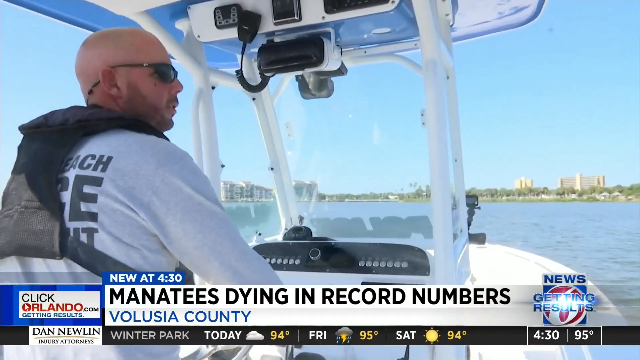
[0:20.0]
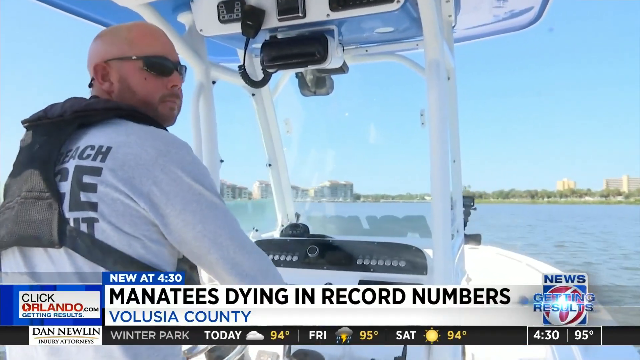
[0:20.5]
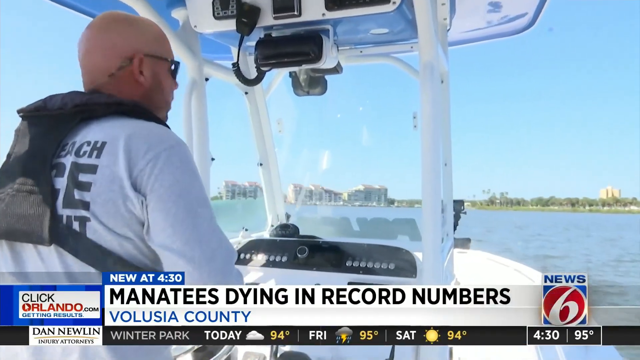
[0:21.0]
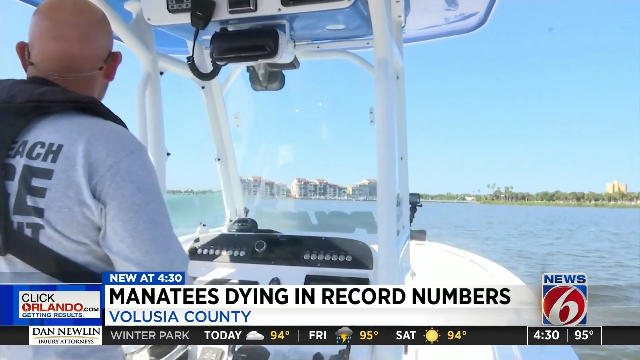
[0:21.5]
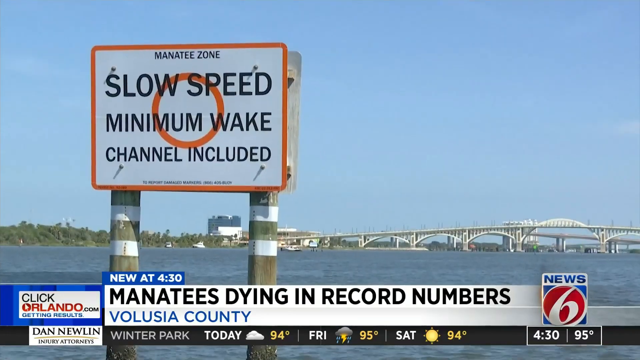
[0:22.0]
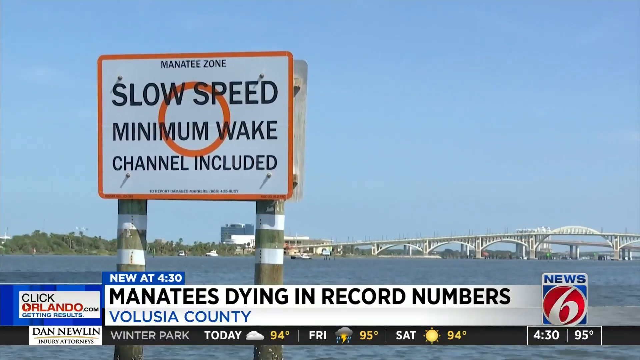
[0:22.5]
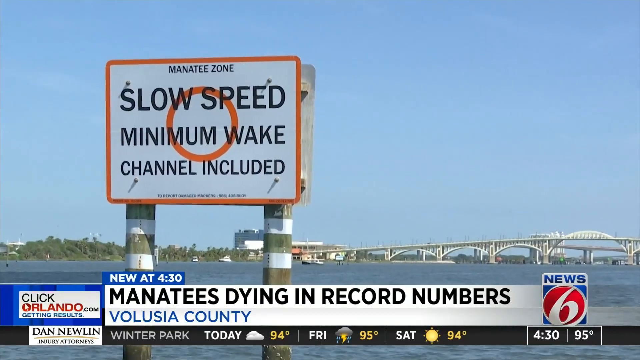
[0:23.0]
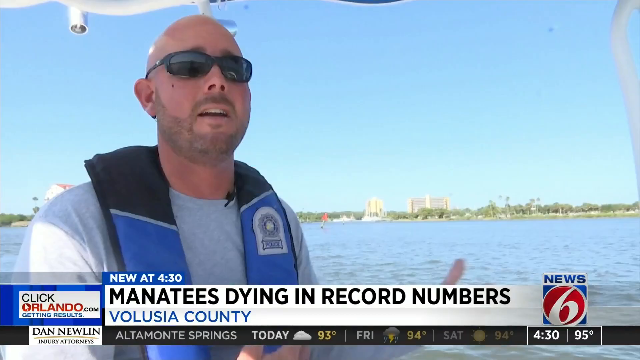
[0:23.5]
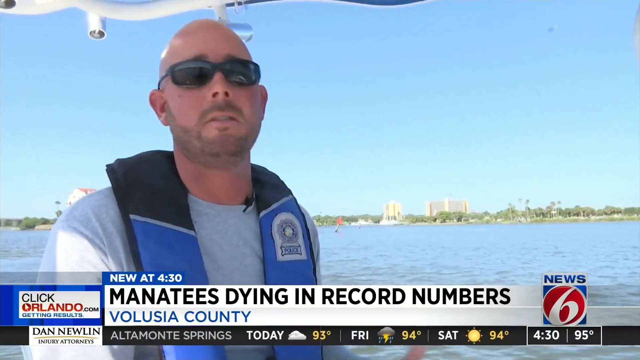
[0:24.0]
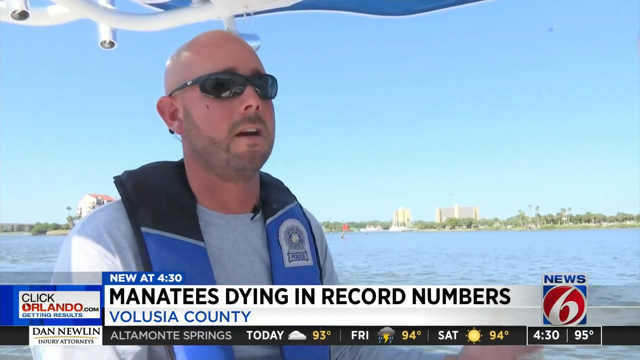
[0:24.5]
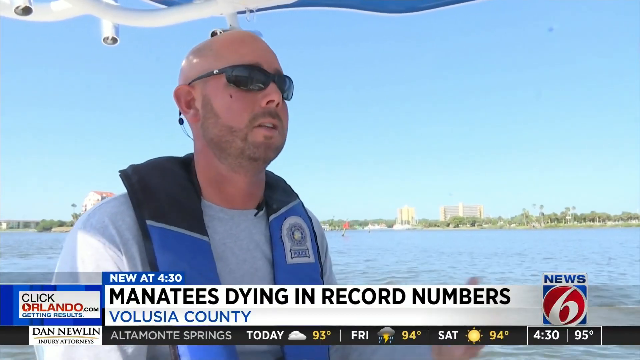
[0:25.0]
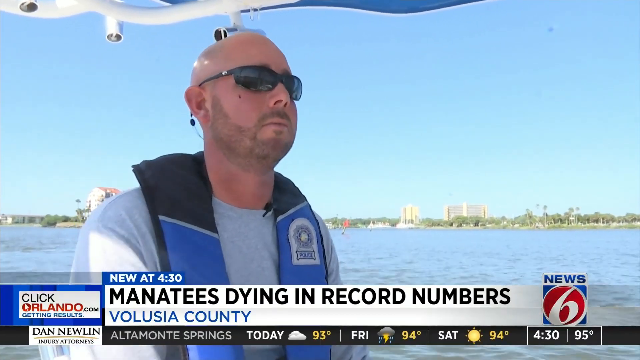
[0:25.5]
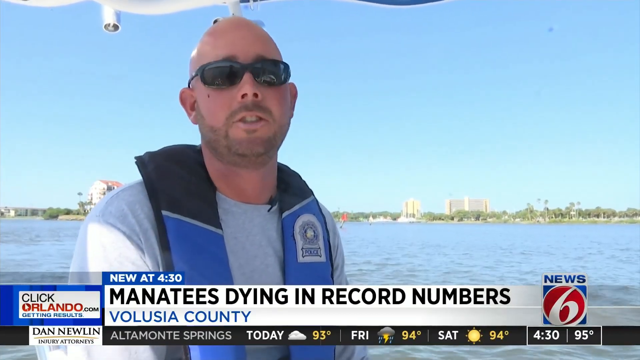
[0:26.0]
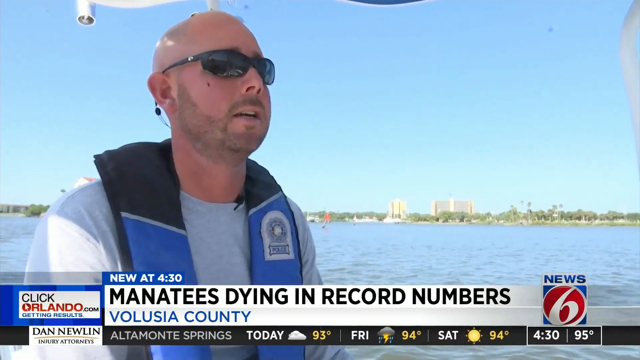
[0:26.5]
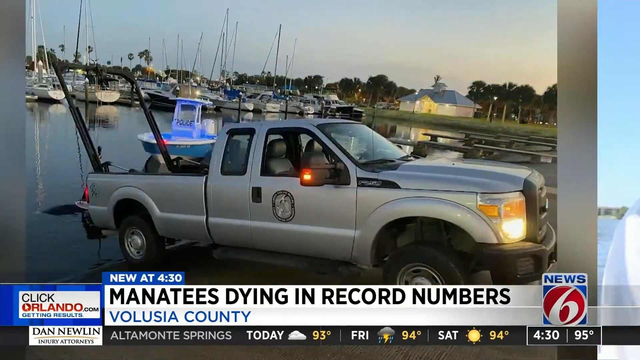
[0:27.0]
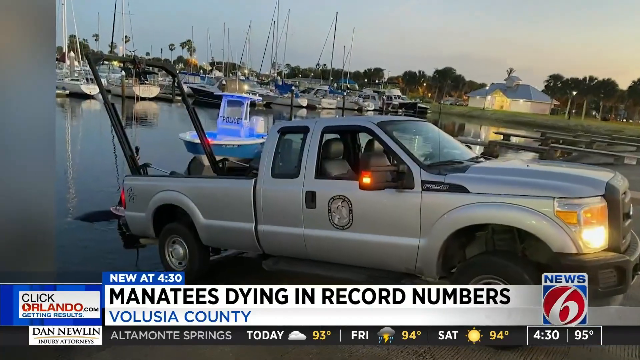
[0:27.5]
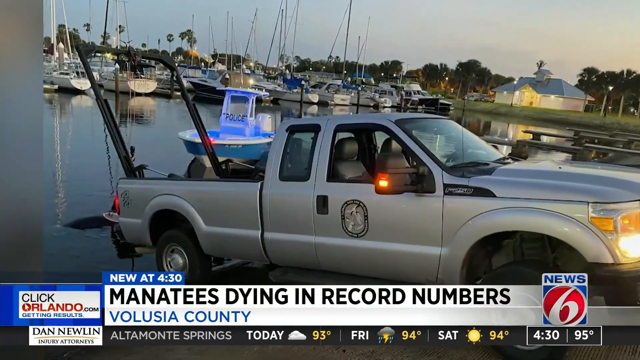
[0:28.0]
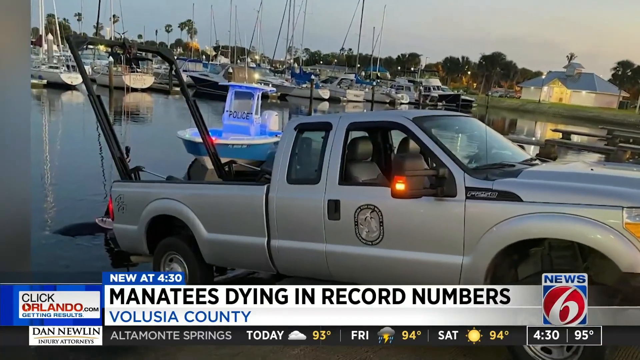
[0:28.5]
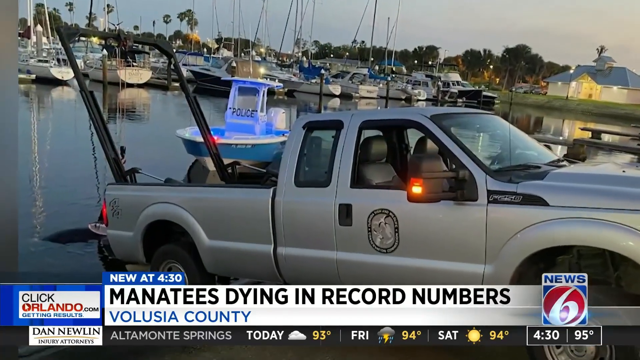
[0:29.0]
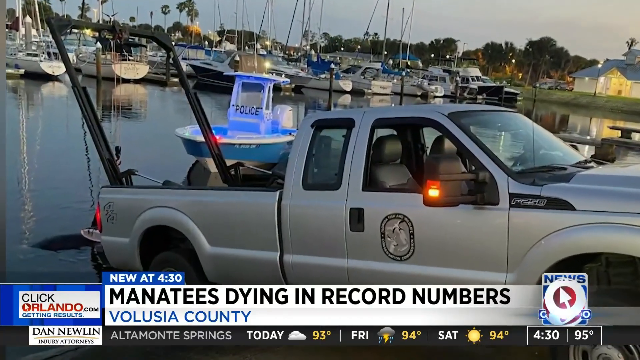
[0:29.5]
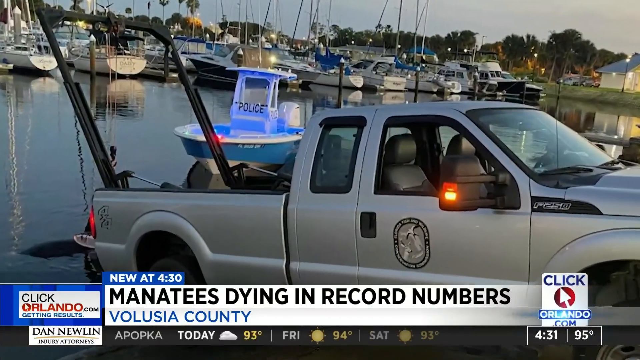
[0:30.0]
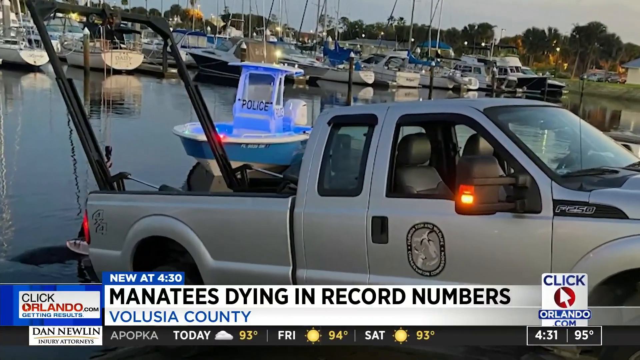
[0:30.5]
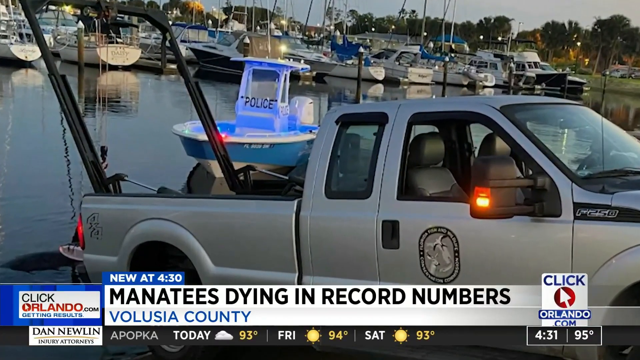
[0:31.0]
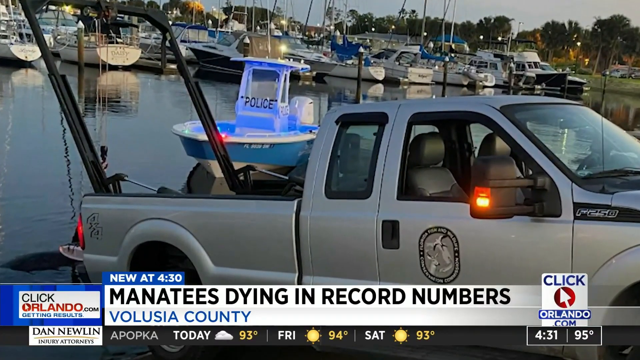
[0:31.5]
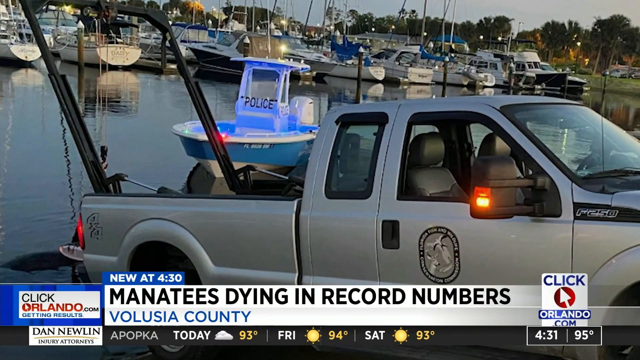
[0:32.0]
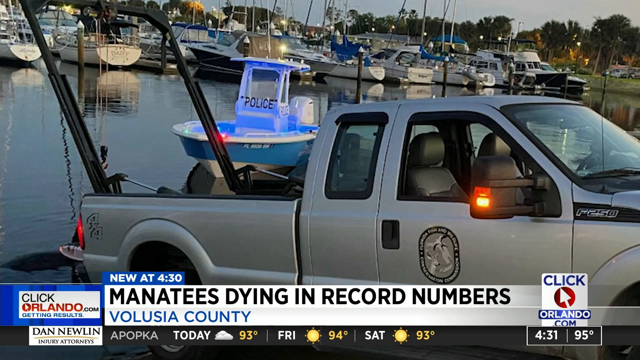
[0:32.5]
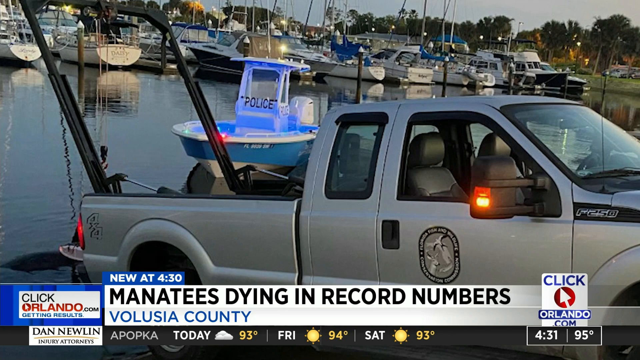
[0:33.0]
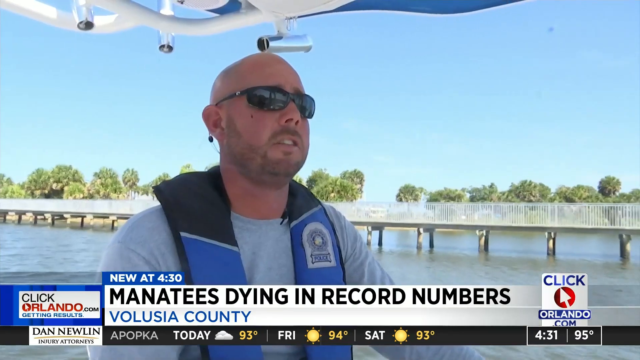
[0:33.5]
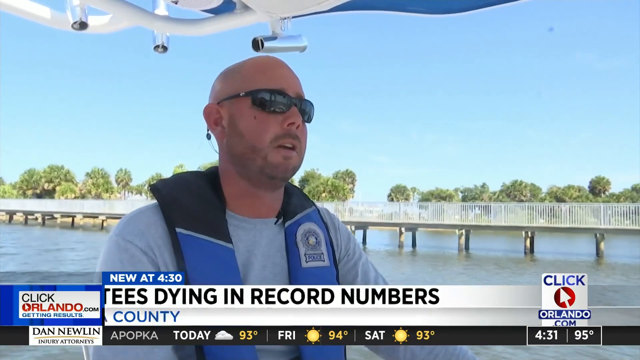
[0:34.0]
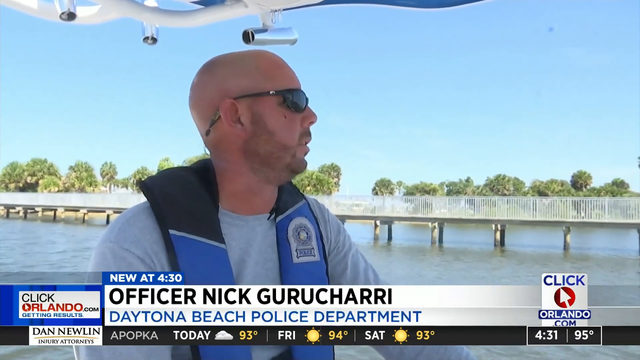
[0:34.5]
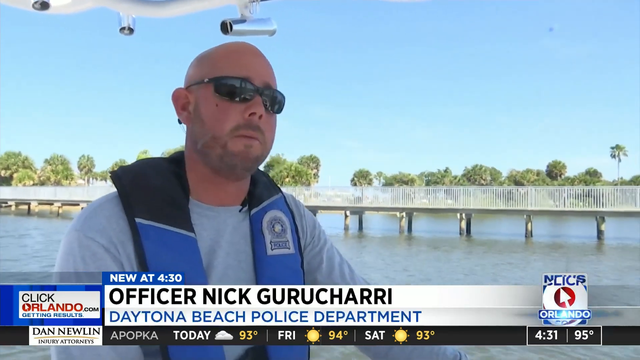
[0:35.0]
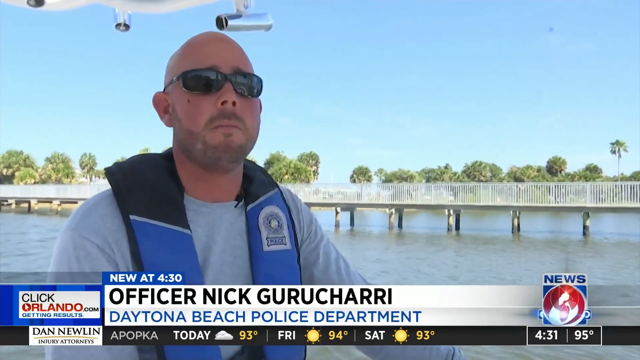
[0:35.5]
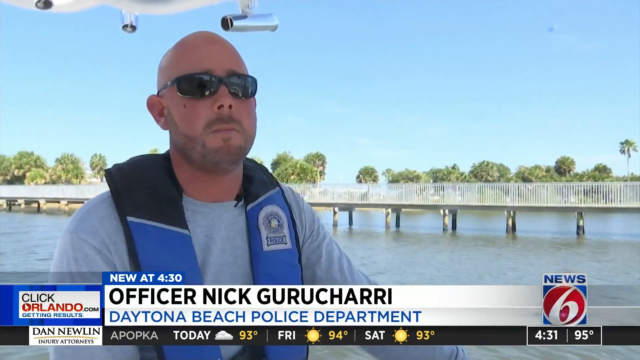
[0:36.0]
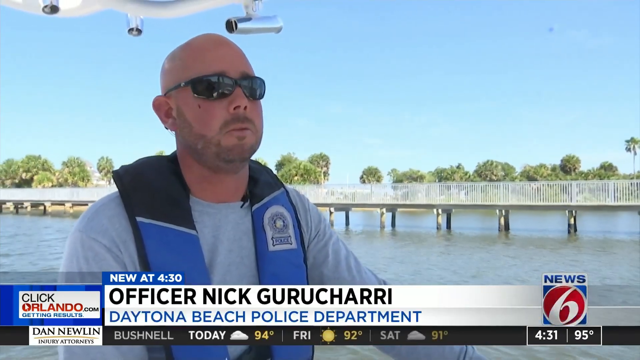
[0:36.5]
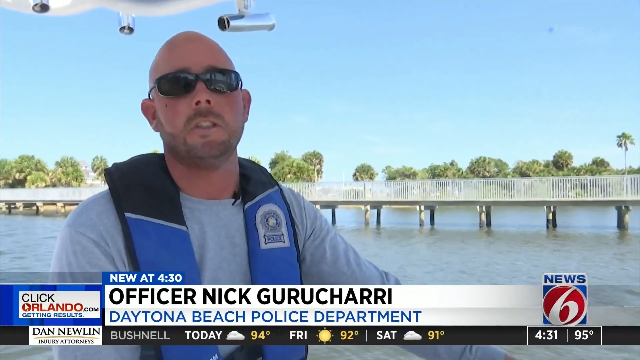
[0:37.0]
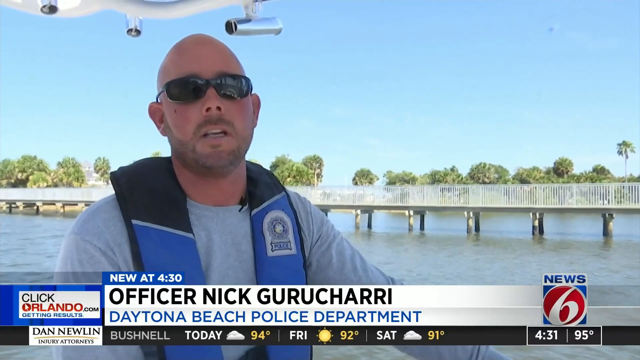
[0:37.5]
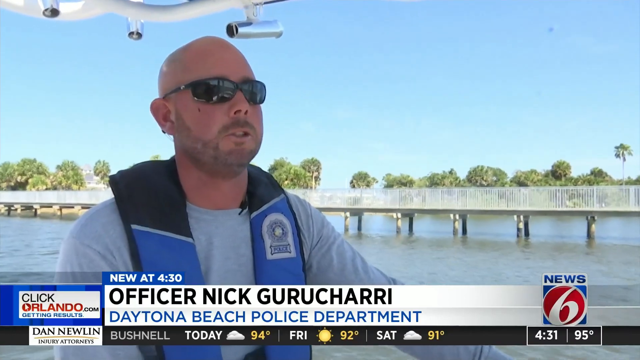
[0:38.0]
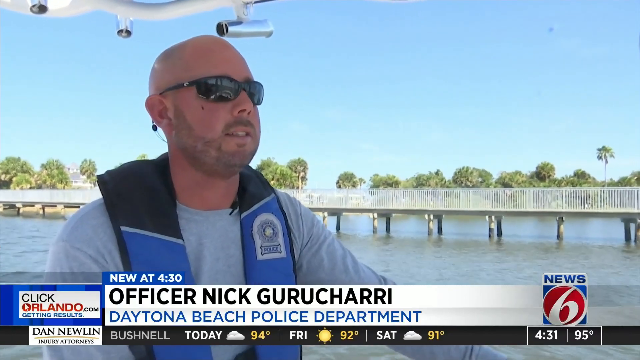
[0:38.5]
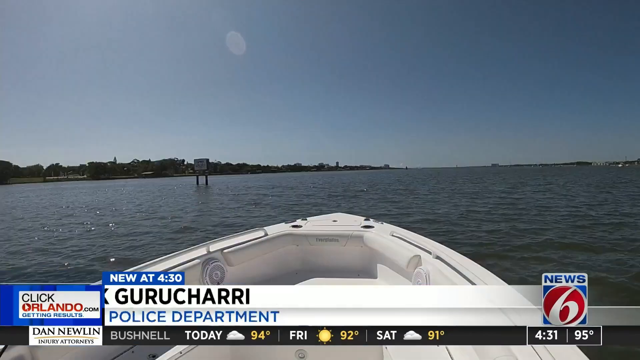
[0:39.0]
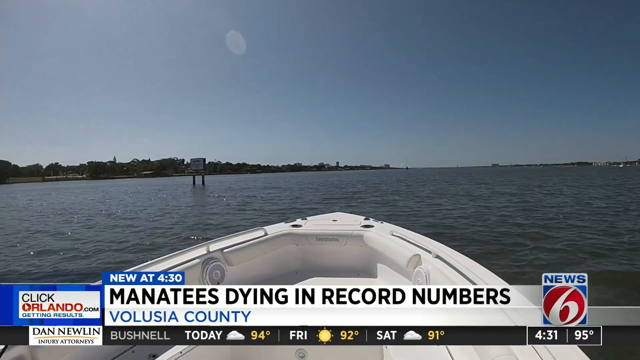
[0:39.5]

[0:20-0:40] The bald policeman continues to speak. He has a beard and sunglasses and wears a blue vest over a long-sleeved white shirt, as well as a life jacket. He sits on the boat and talks to the news cameras, seeming concerned; he is identified as Officer Nick Kurachari. The text at the top says it is new at 4:30, the branding reads "News 6, Getting Results," and "ClickOrlando.com" appears on the left. In the distance, buildings and trees are visible off the shore. A radio is above him on the boat, and what appears to be a GoPro or some kind of camera is attached to the front of the boat. The water is brown, a dark brown, and hard to see through.